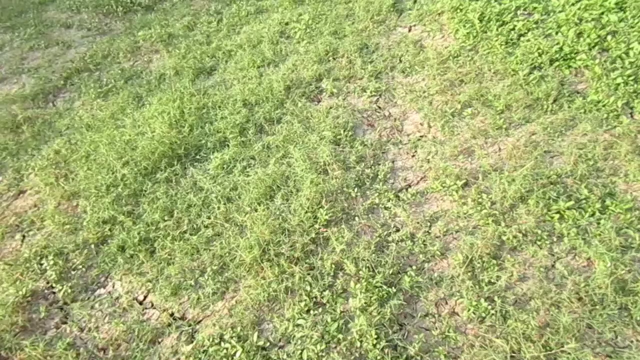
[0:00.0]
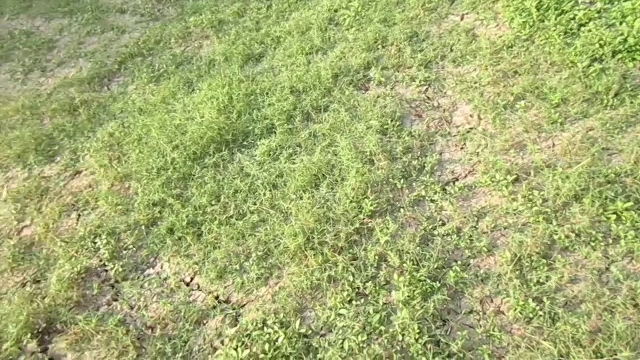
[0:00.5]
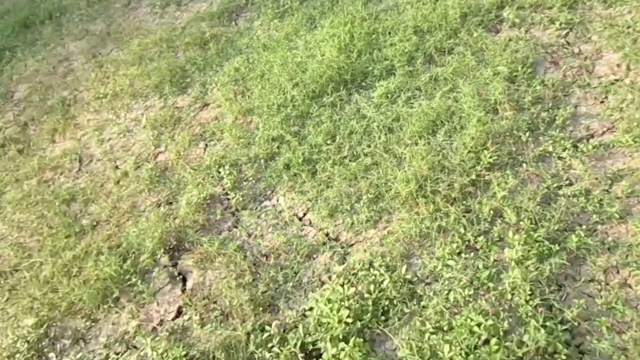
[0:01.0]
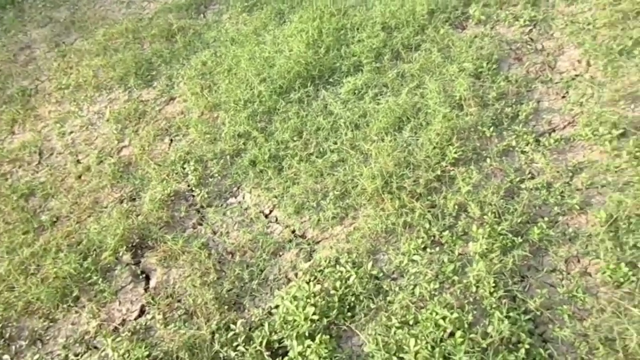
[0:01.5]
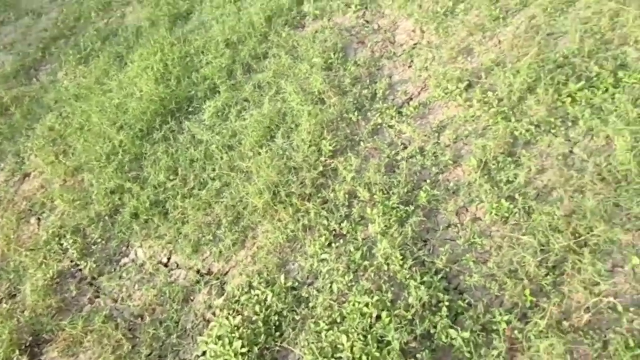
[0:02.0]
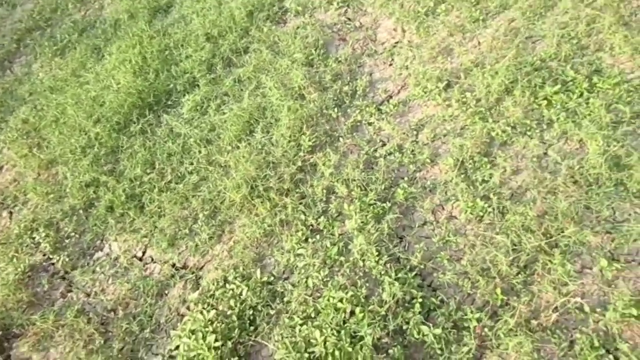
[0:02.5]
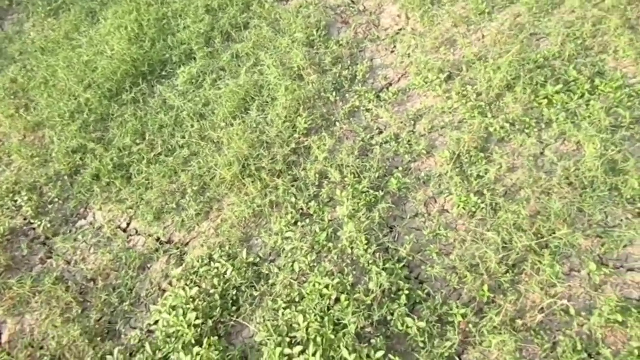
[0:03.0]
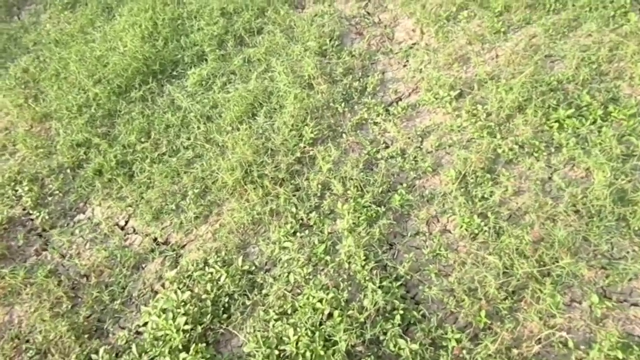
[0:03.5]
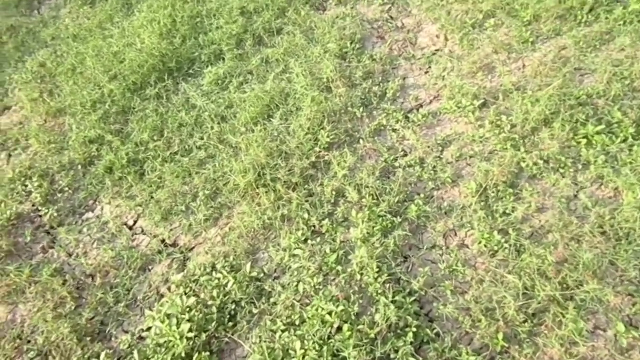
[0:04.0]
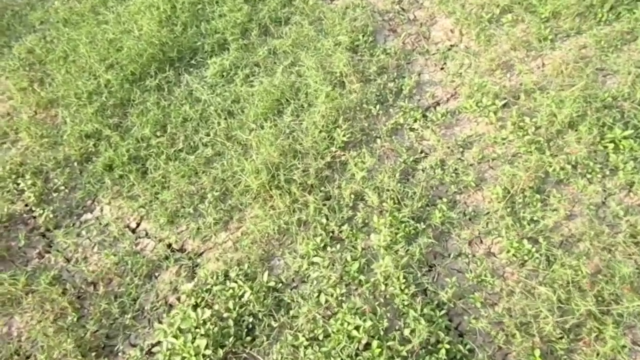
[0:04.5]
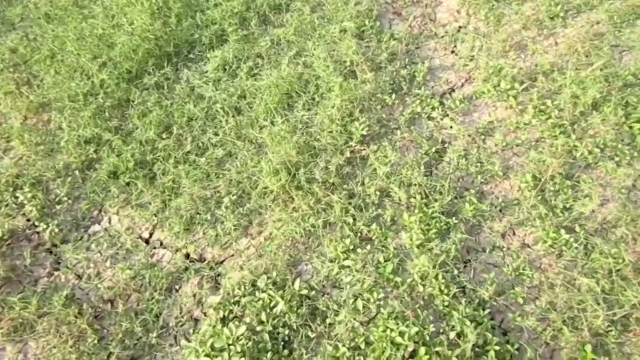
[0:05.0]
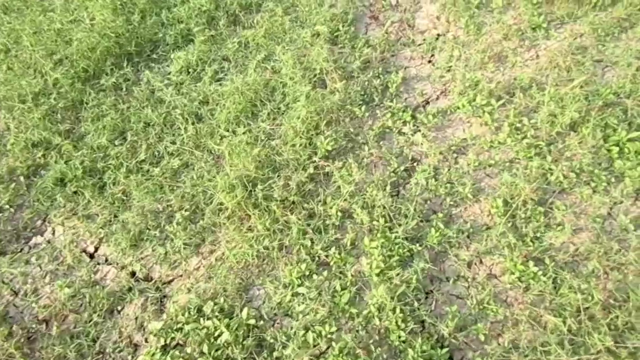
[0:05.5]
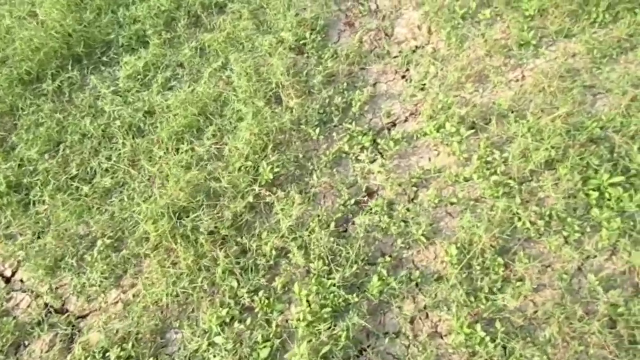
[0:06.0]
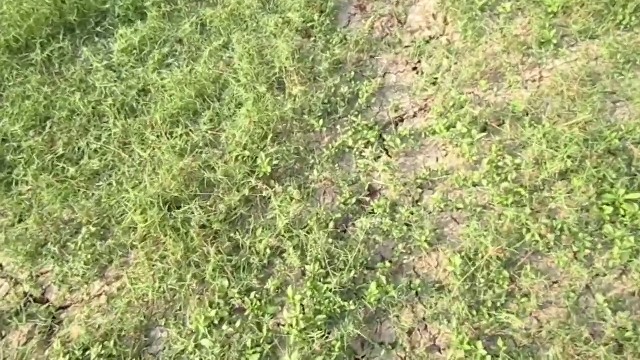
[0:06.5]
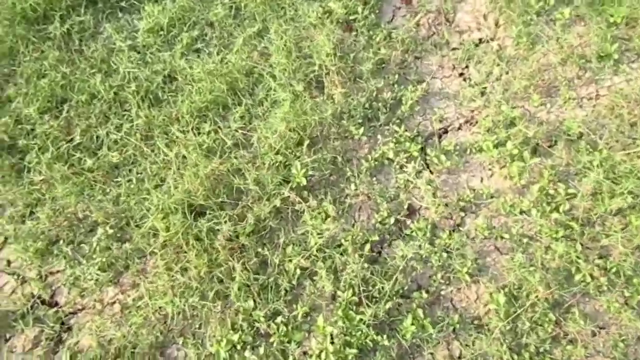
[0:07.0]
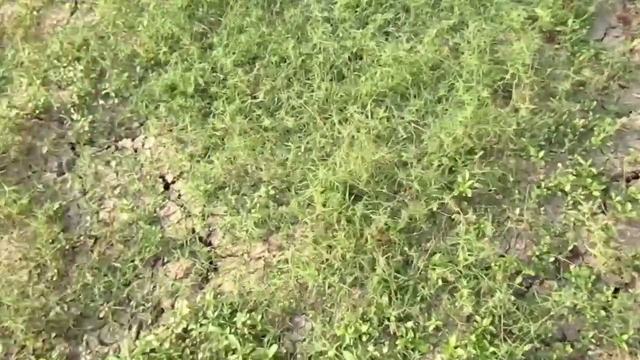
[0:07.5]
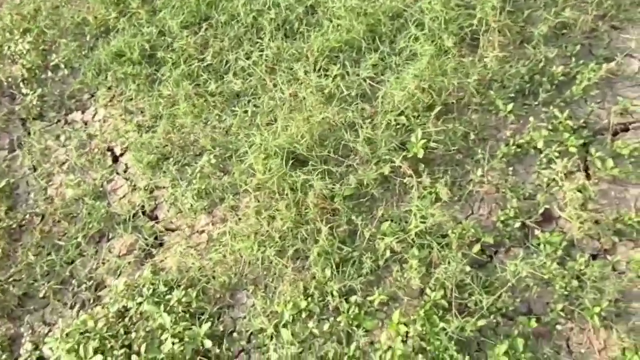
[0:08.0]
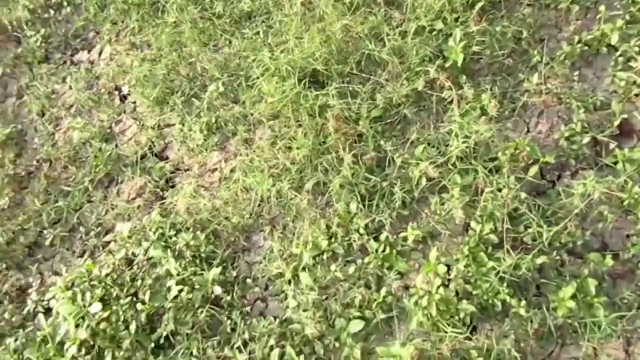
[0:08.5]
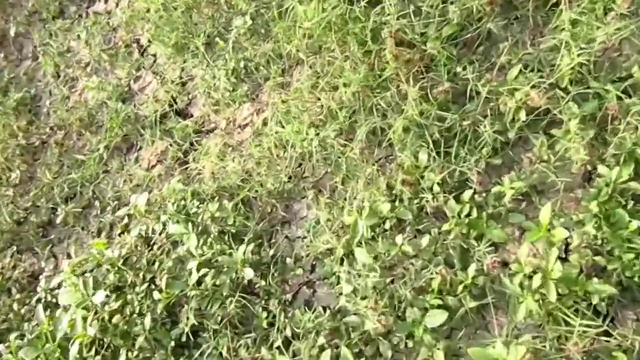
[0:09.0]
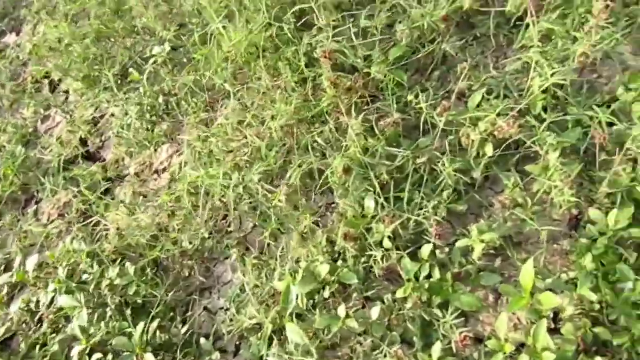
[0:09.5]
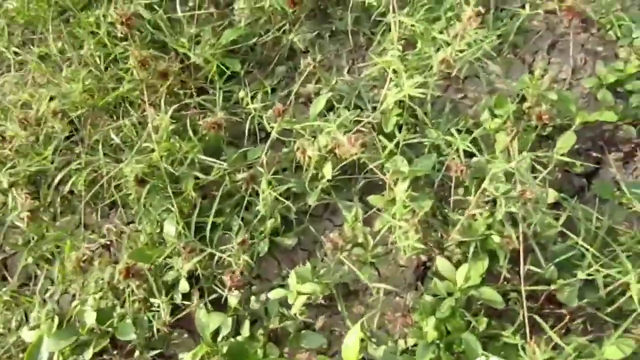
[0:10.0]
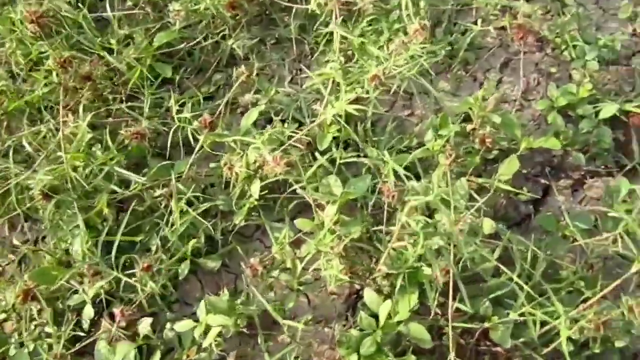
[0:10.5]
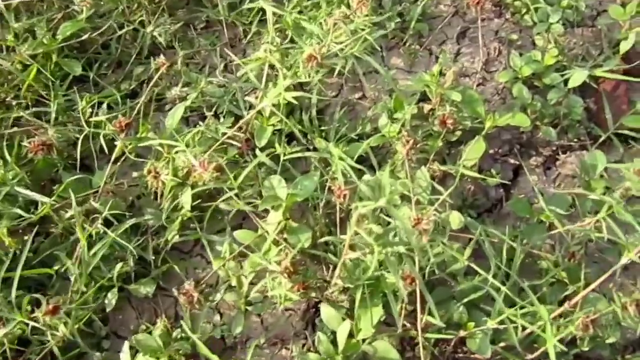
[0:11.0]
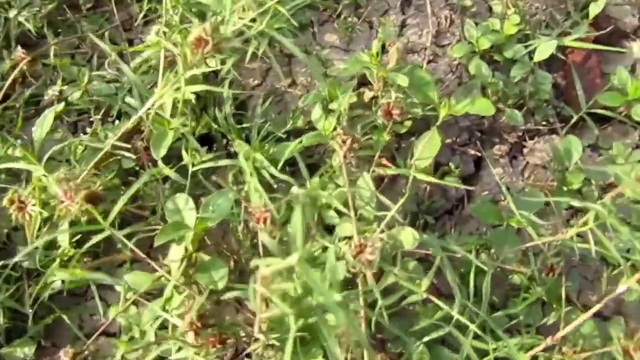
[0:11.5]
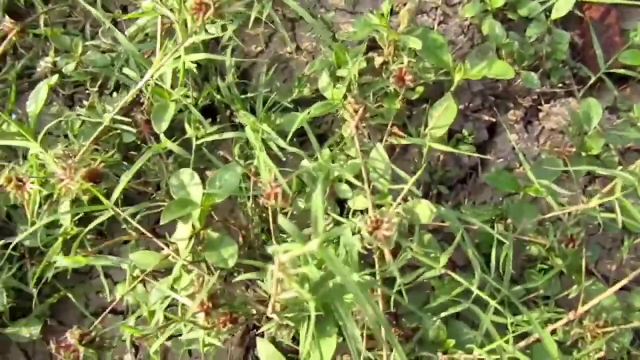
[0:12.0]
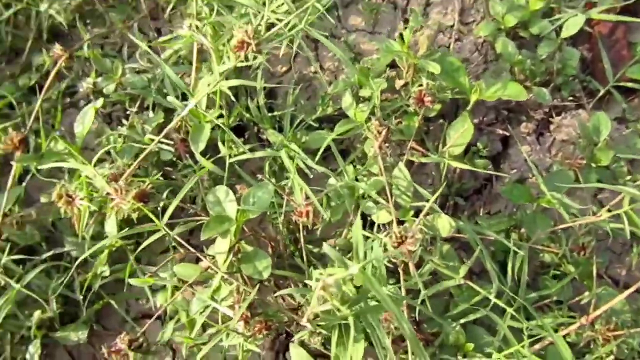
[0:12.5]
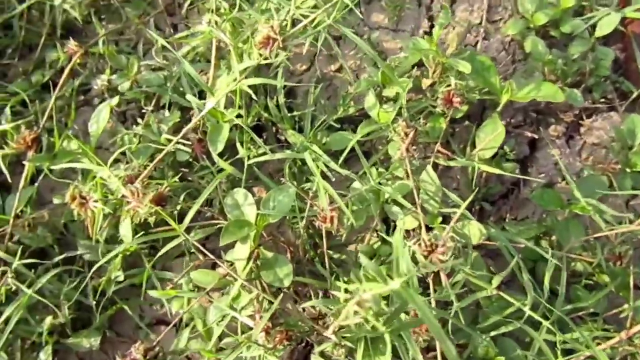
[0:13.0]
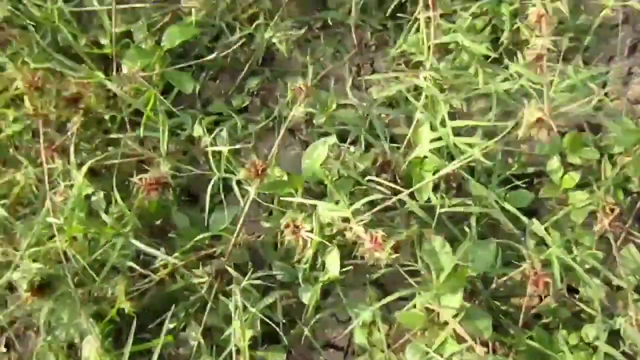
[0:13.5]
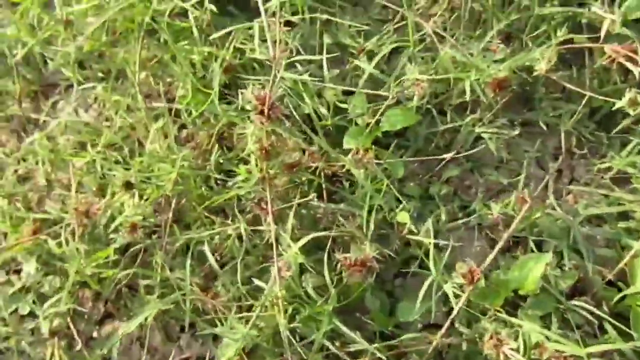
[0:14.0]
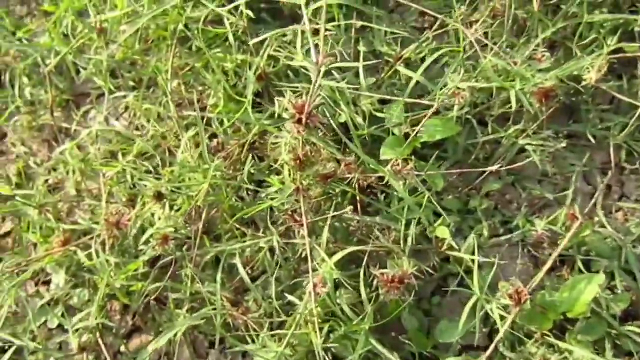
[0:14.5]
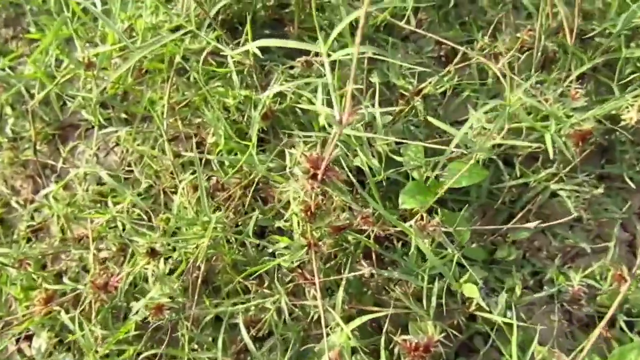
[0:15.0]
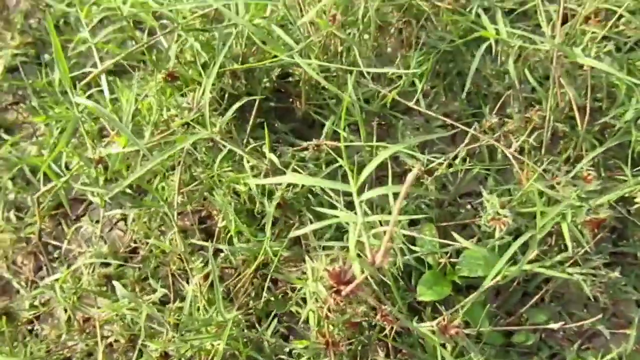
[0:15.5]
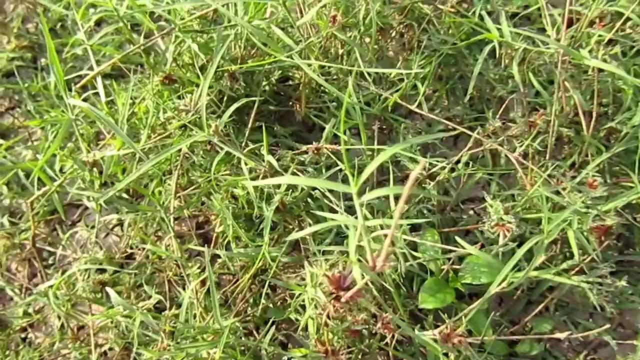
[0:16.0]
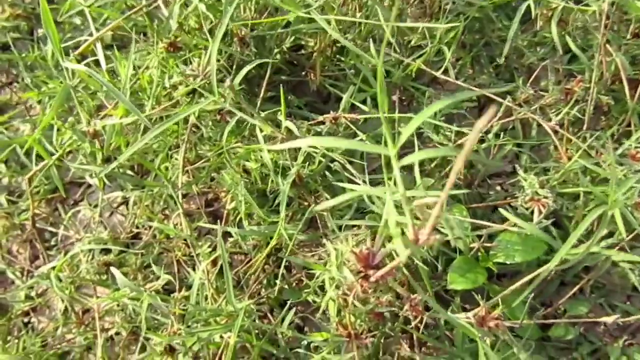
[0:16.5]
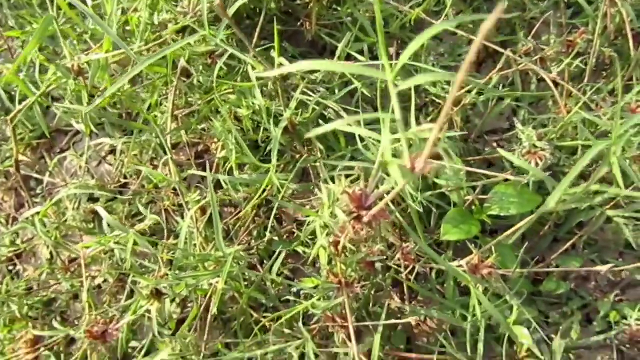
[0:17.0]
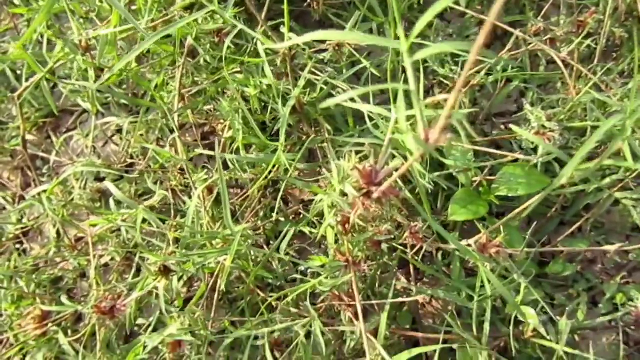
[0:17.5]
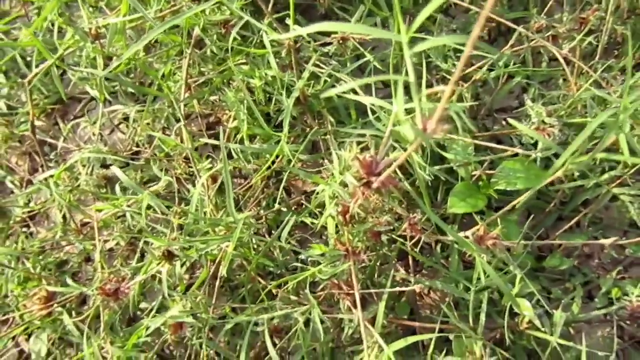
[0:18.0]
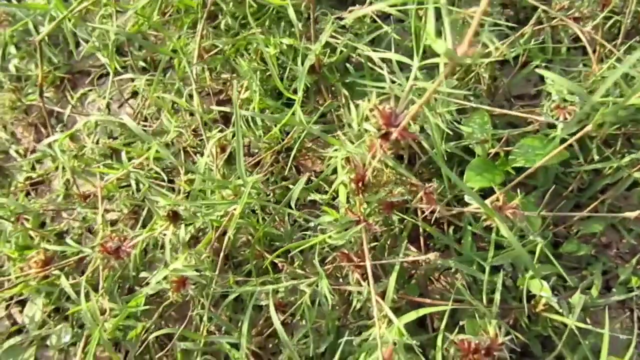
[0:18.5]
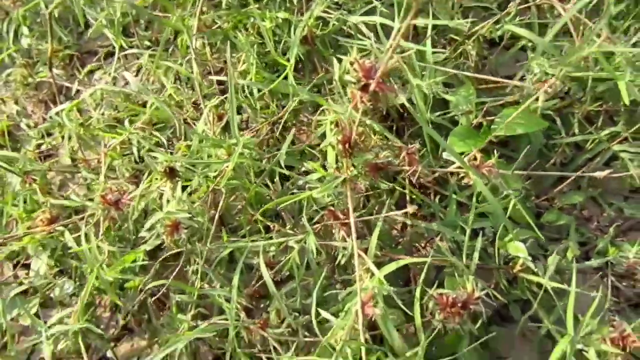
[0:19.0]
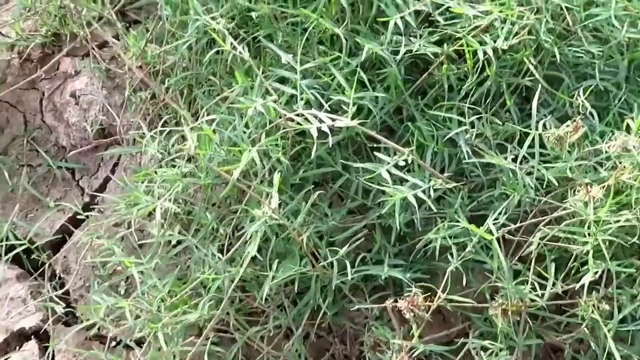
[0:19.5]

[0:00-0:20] The camera points downward at the ground, showing low-cut grass and a bit of dry dirt. It moves forward and downward, gradually getting closer and closer to the ground until the grass blades are near the camera, revealing both green grass and nettles, with dirt beginning to peek out from between the grass. Both the dirt and the grass look very dry: the grass looks very light and dehydrated, and the dirt is cracked in a number of places. The camera also pans over what look to be nettles with small red balls bearing spiky protrusions. Toward the end, the view switches to a different shot of similar grass and dirt, this time with longer grass.